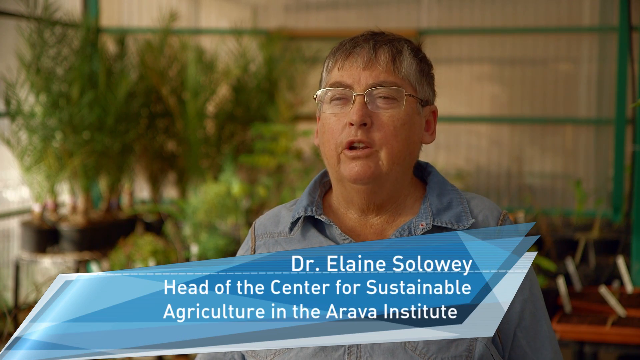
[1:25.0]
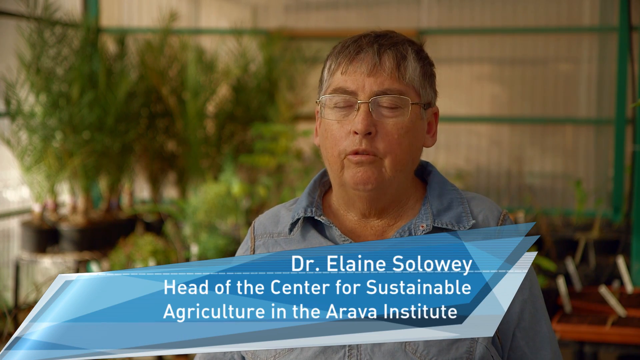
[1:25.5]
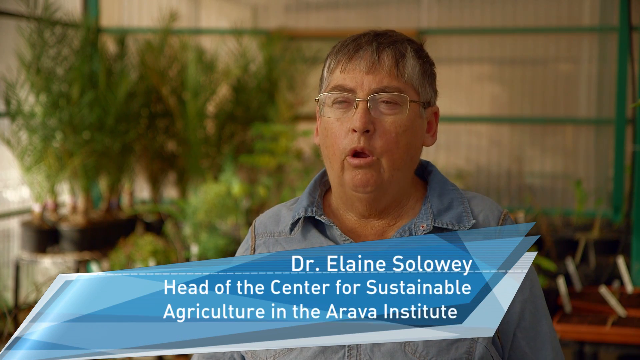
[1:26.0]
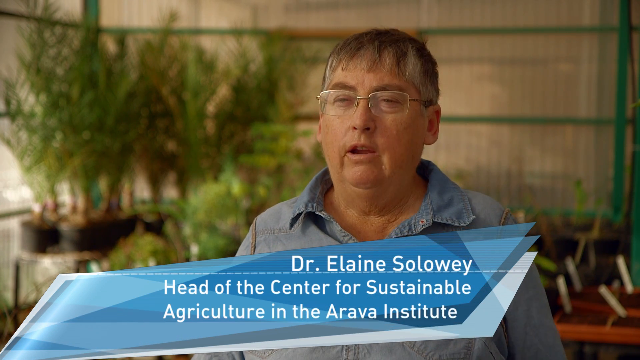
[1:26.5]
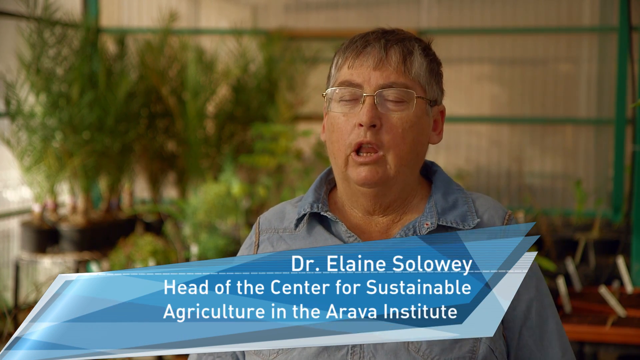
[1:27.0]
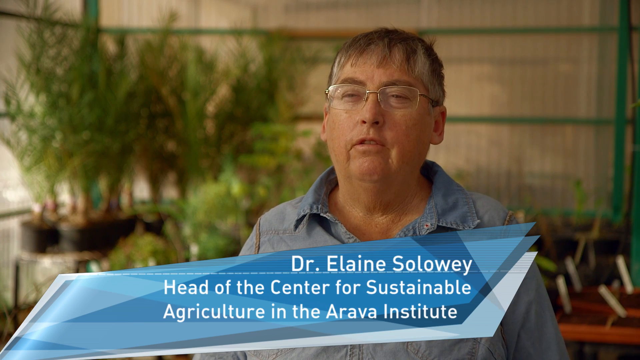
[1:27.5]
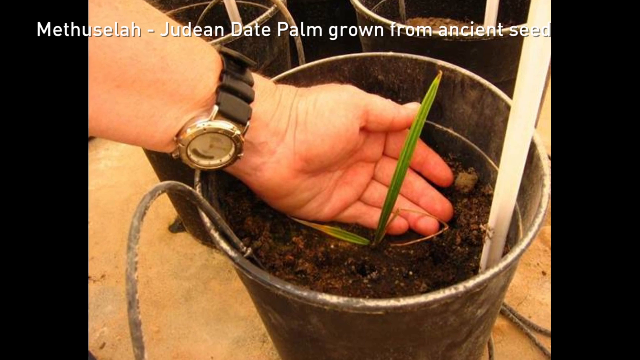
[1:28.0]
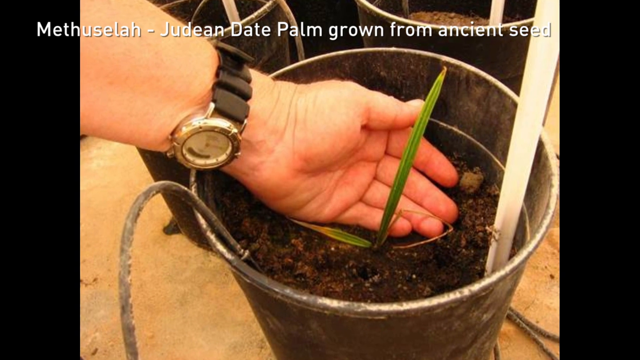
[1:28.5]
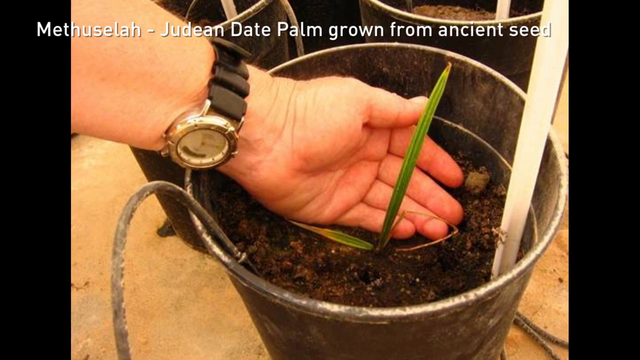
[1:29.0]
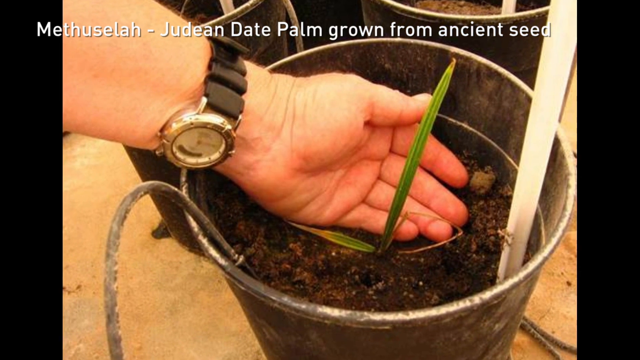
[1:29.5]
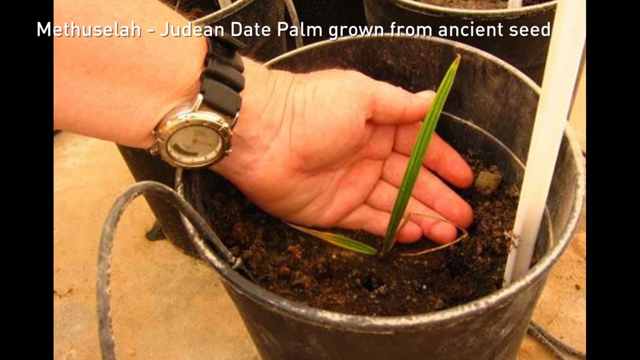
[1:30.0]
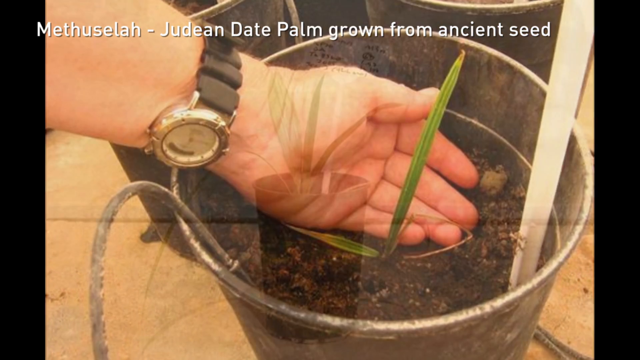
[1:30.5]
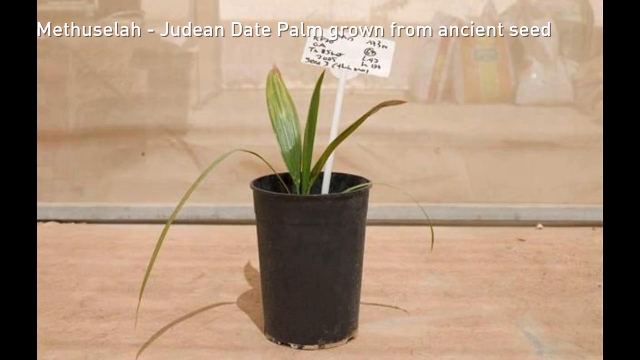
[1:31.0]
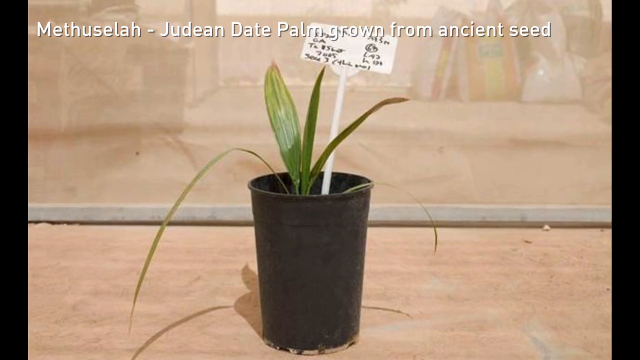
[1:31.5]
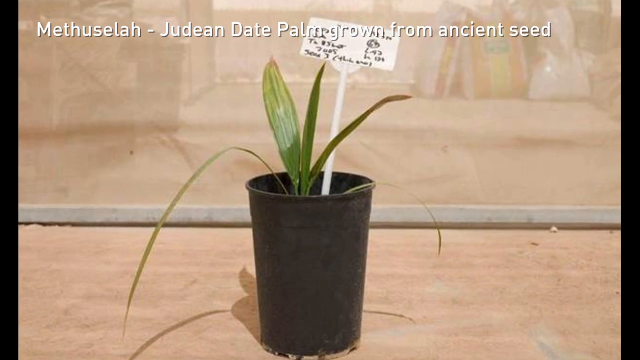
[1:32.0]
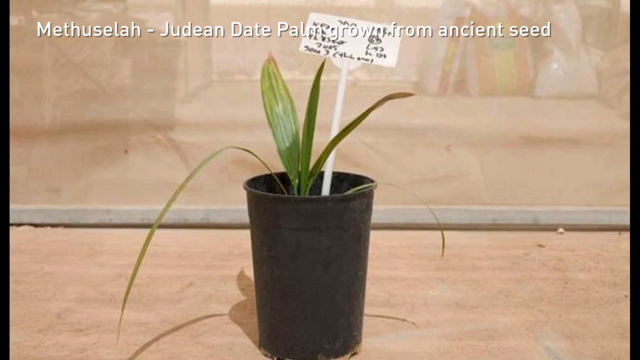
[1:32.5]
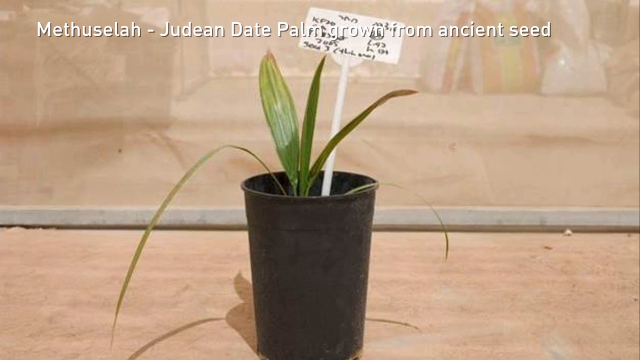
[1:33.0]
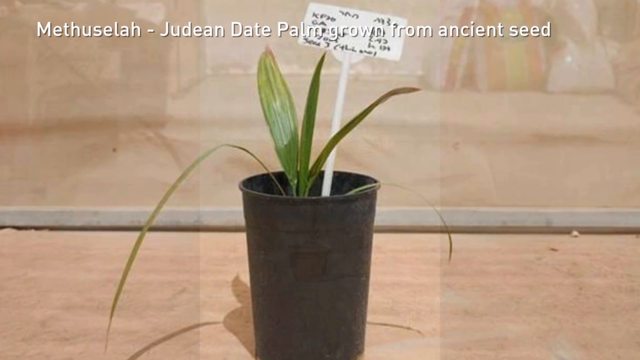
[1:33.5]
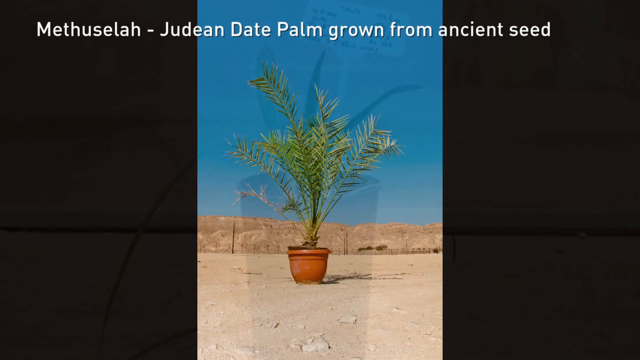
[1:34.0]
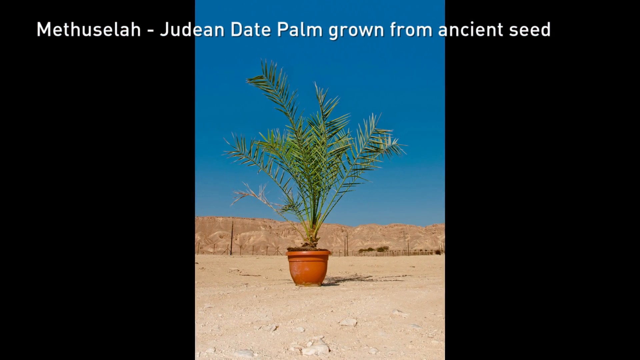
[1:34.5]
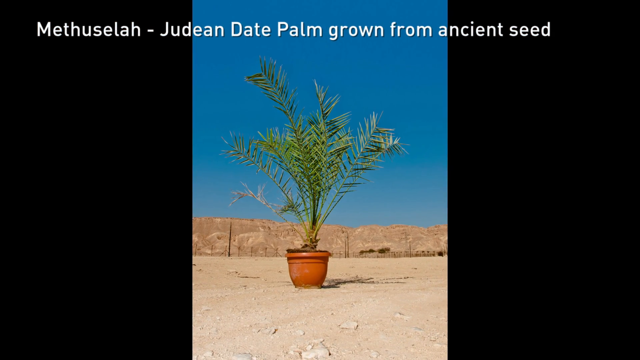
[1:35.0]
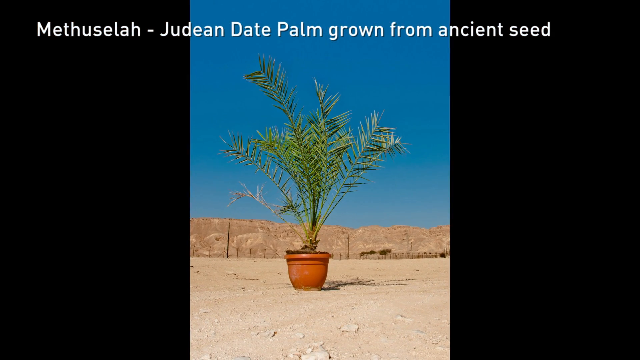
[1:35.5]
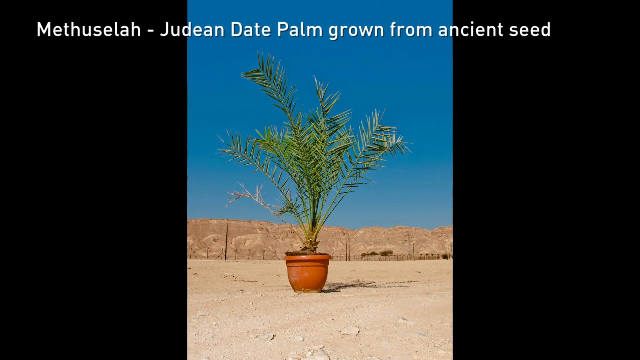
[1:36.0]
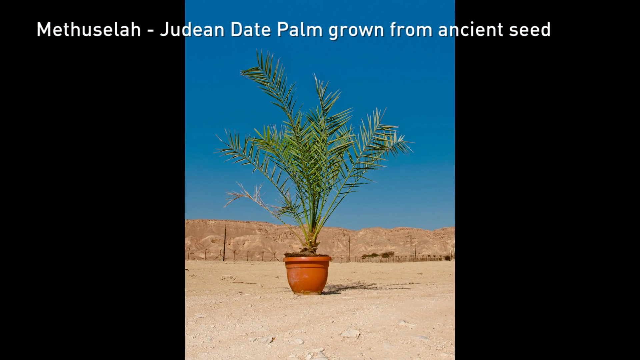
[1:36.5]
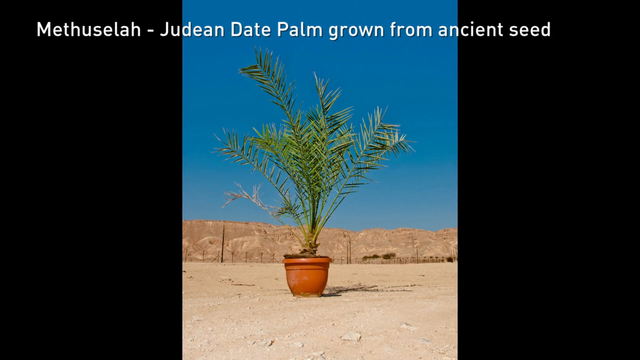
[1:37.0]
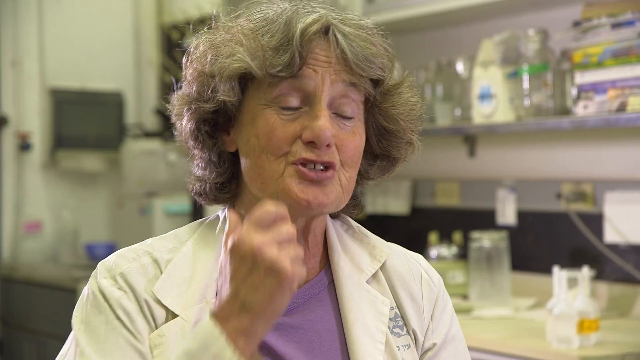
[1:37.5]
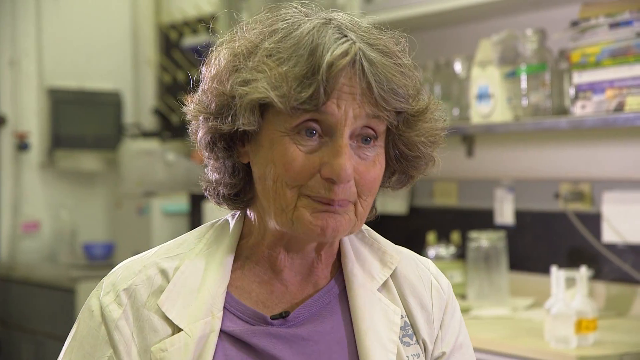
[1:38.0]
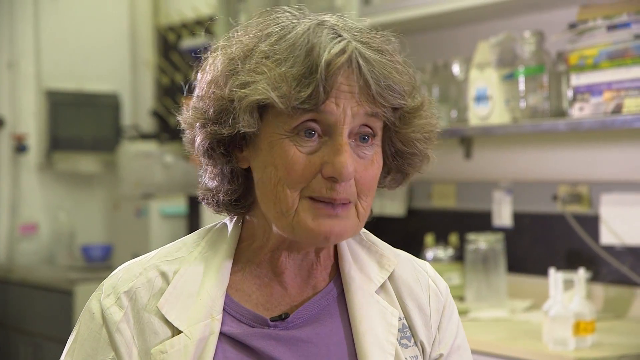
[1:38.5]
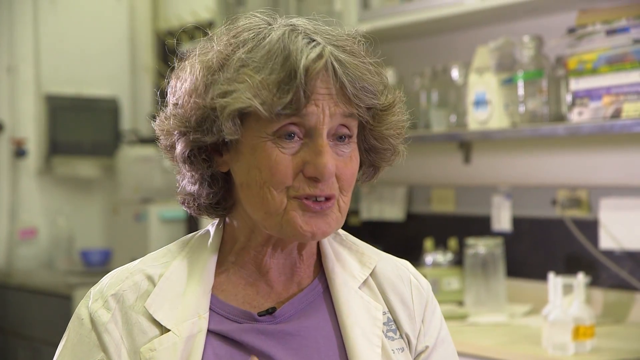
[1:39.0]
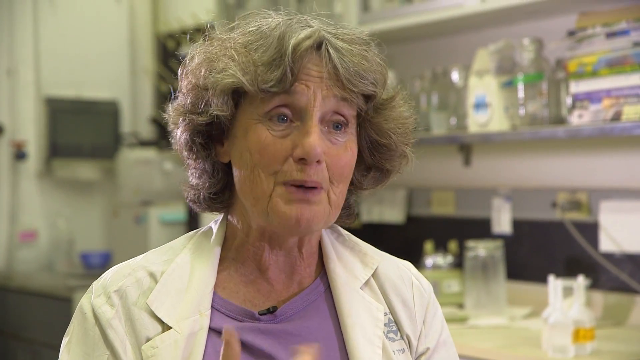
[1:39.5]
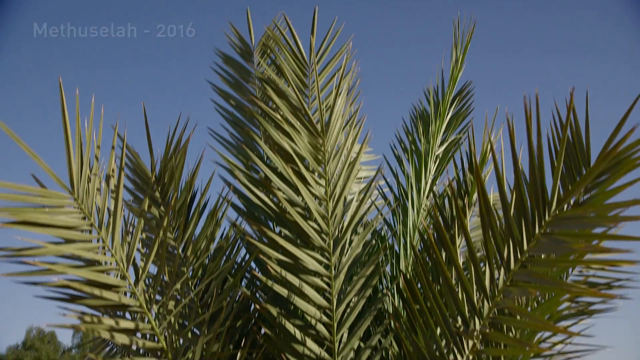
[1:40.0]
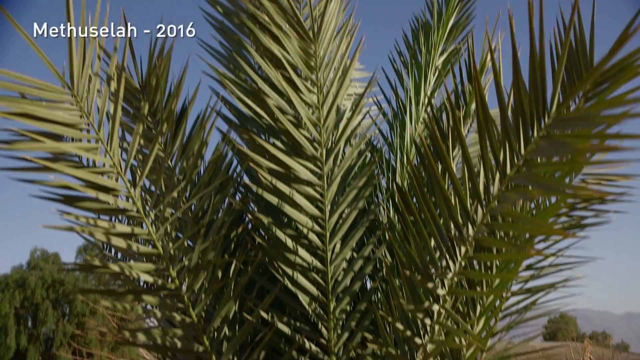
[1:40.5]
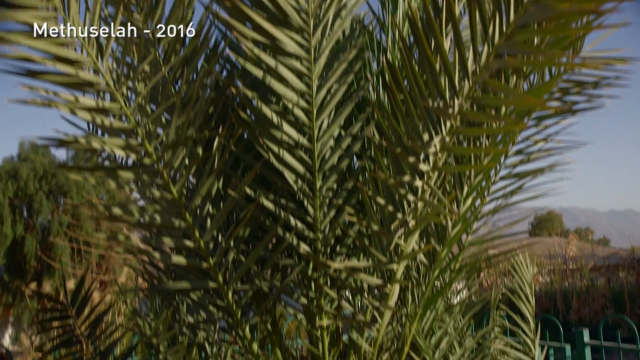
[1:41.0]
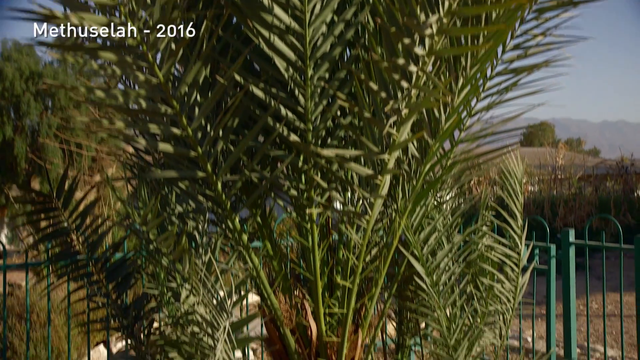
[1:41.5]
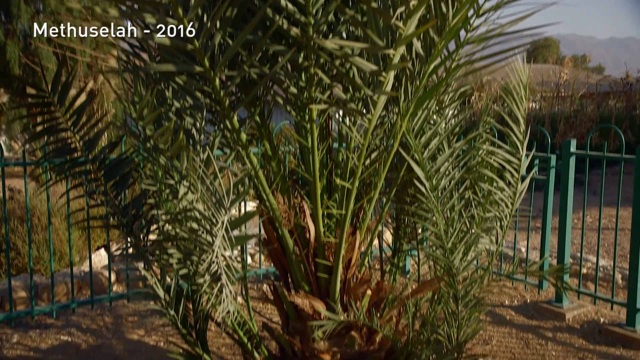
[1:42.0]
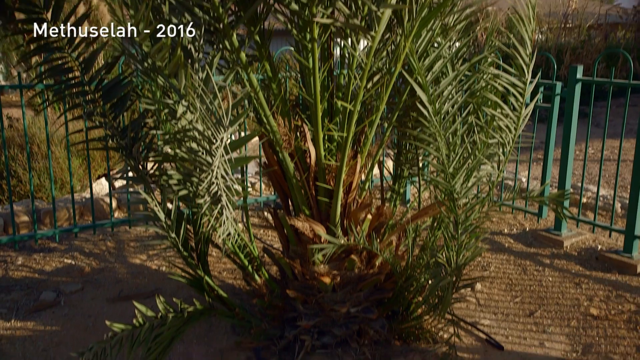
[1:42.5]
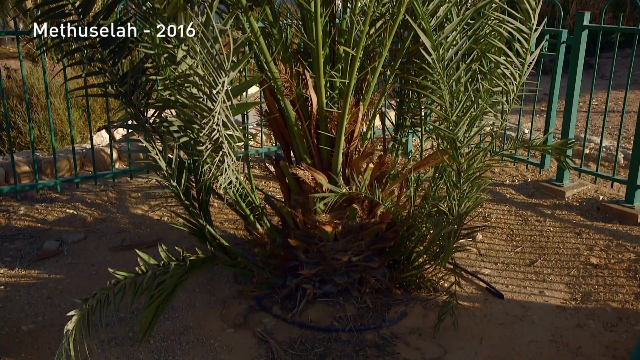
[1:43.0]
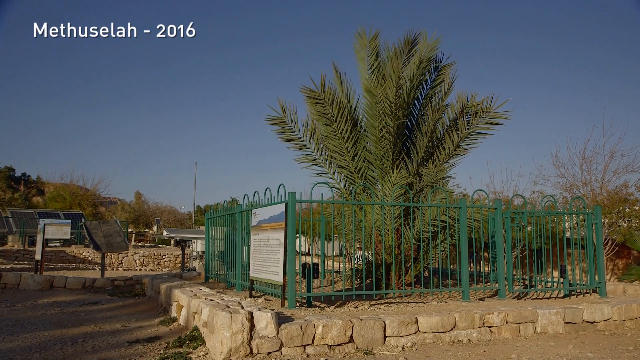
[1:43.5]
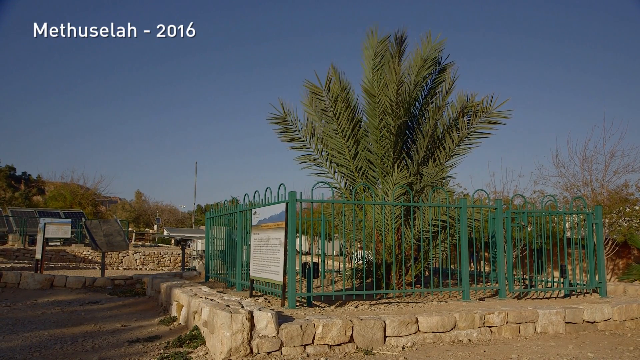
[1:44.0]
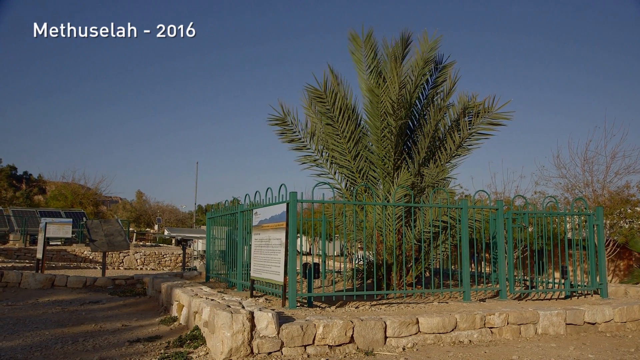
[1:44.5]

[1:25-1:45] Dr. Elaine Soloway shows a picture of a bucket with a plant growing in it, a Judean date palm, and then another picture of it in a larger pot as it takes root and grows larger. The video shifts to another doctor, then back to the tree, the Judean date palm, and then back to Dr. Elaine Soloway. It then seems to show more pictures of the same tree at various stages of growth, from a seedling to a plant in a larger pot to a massive tree fenced off with green fencing.